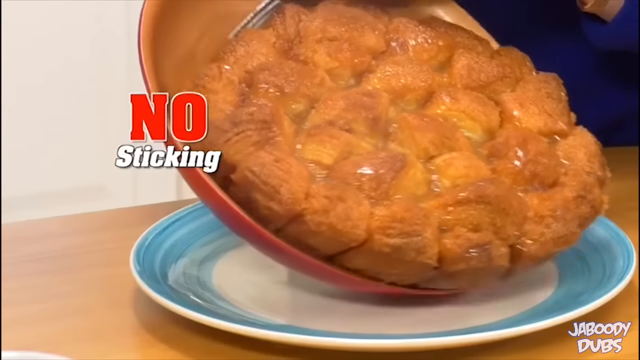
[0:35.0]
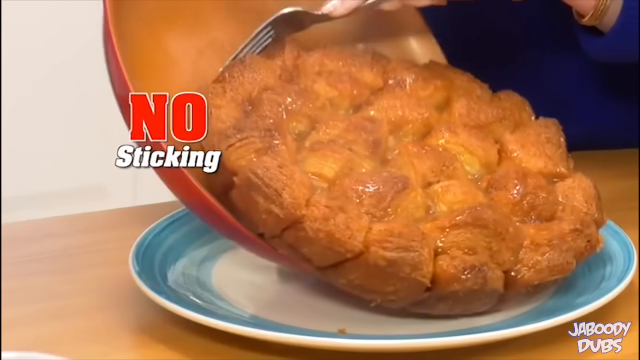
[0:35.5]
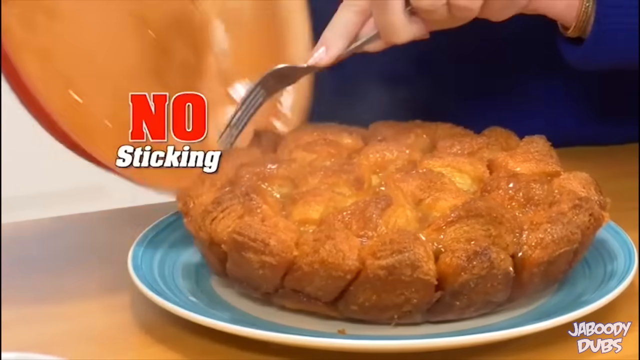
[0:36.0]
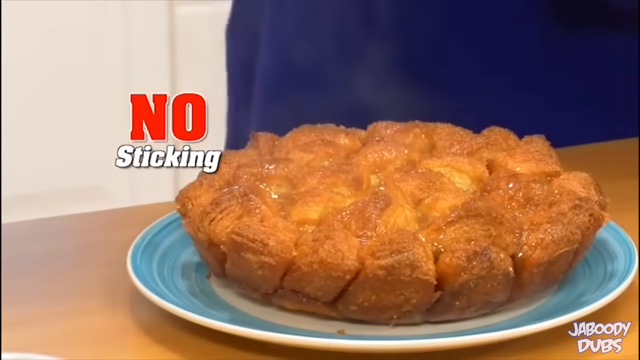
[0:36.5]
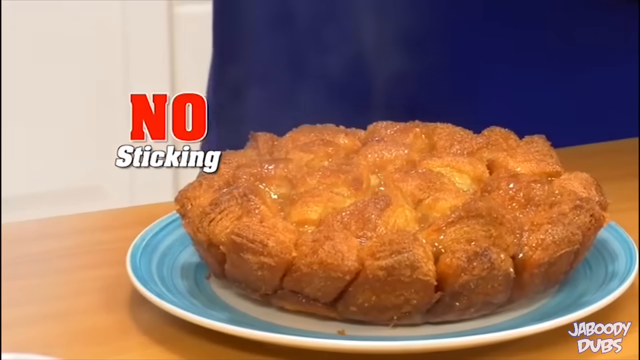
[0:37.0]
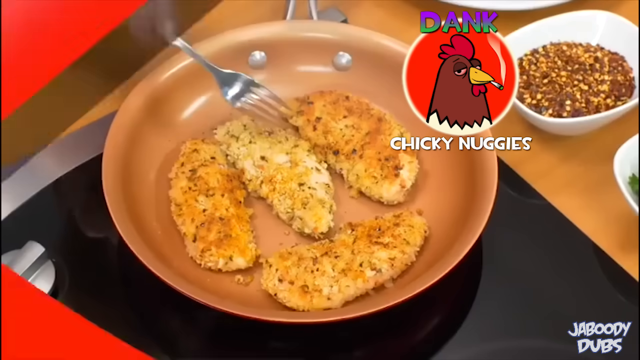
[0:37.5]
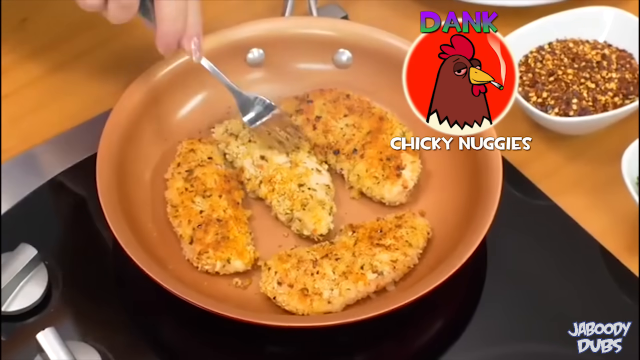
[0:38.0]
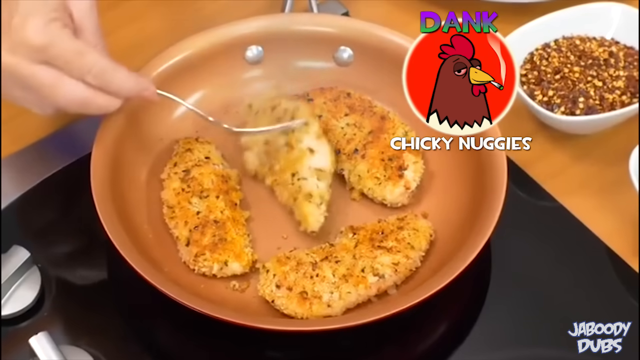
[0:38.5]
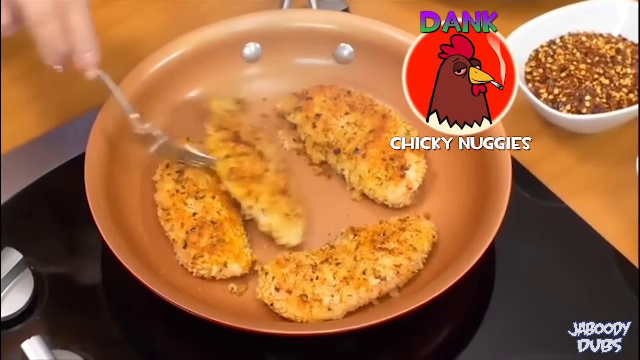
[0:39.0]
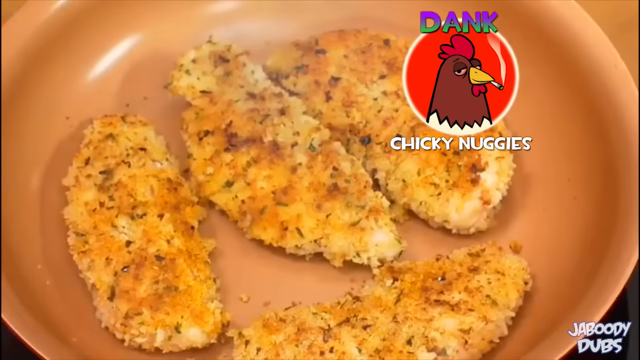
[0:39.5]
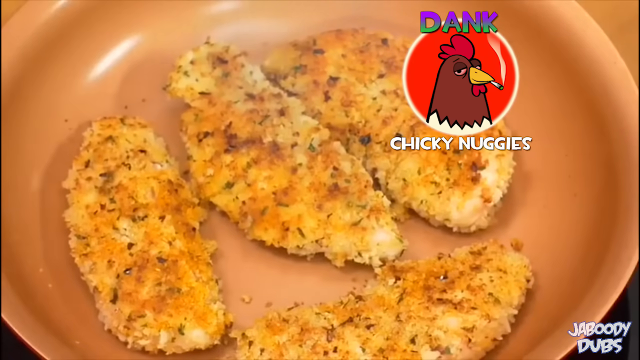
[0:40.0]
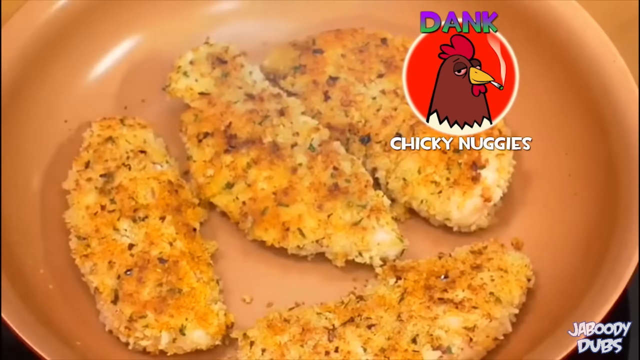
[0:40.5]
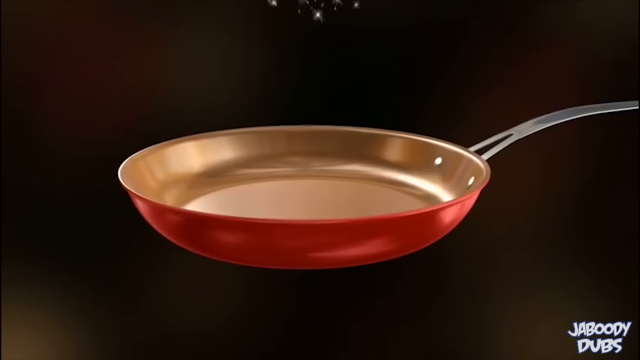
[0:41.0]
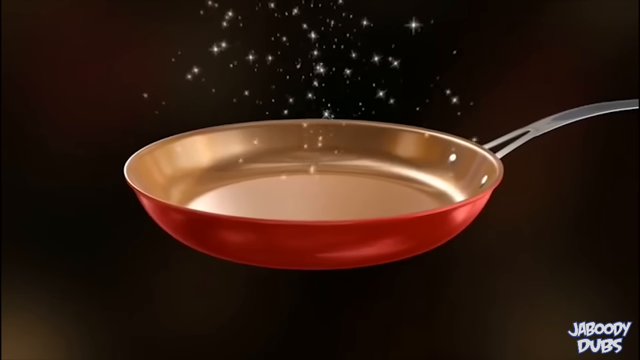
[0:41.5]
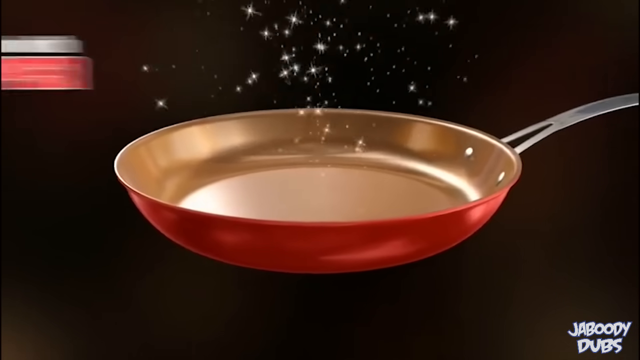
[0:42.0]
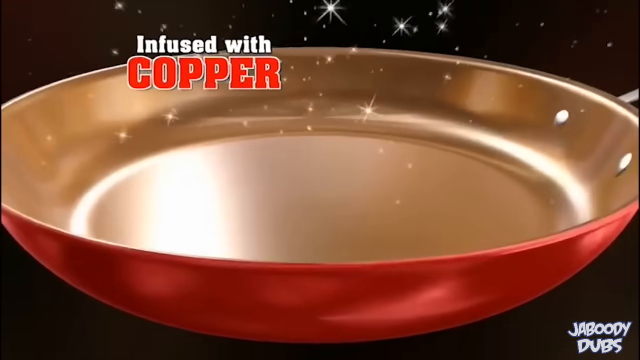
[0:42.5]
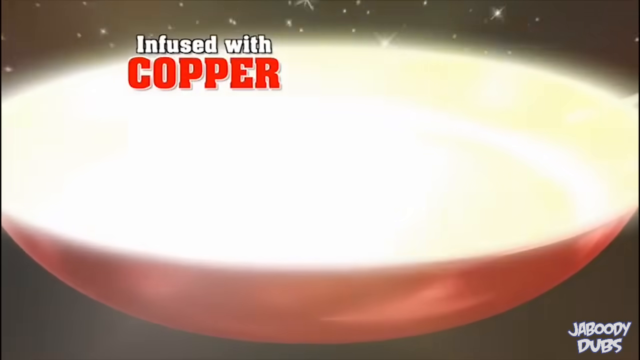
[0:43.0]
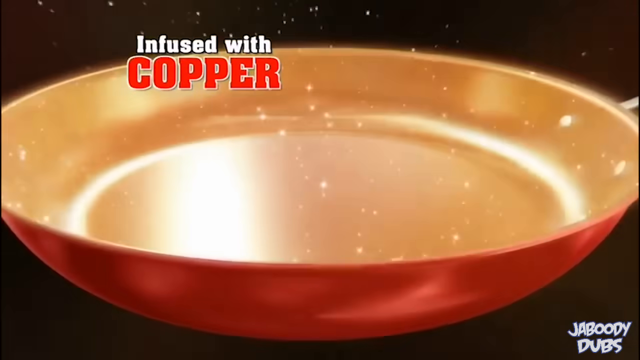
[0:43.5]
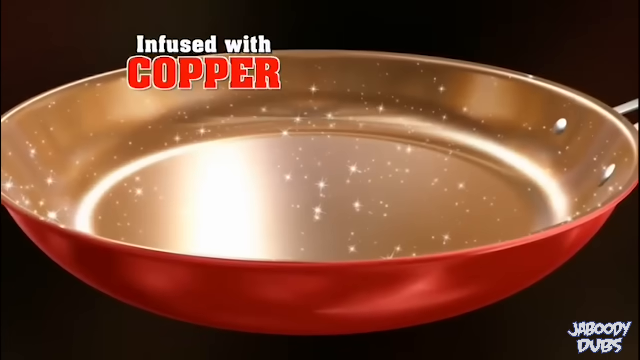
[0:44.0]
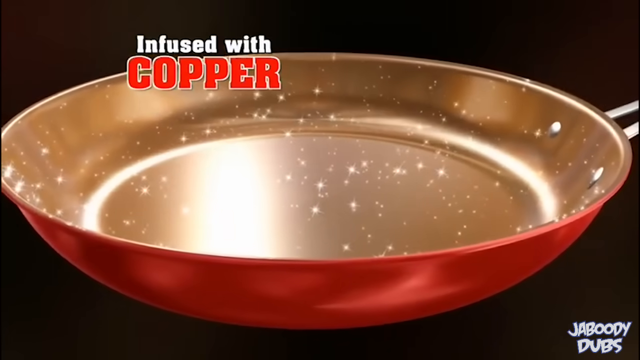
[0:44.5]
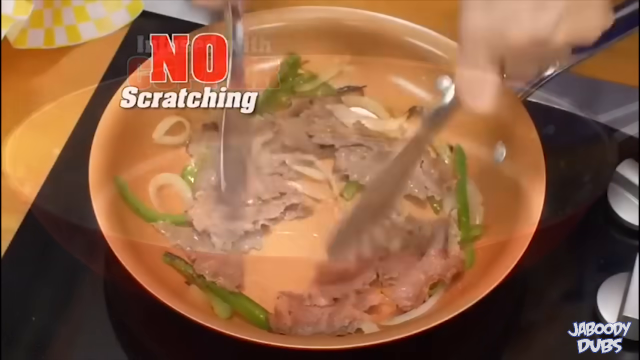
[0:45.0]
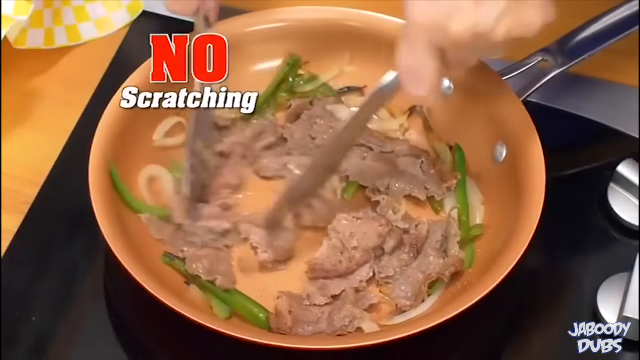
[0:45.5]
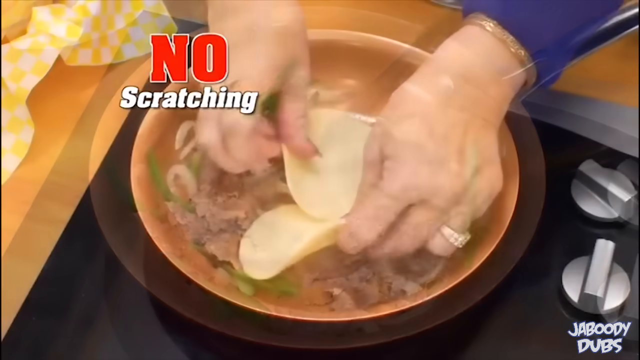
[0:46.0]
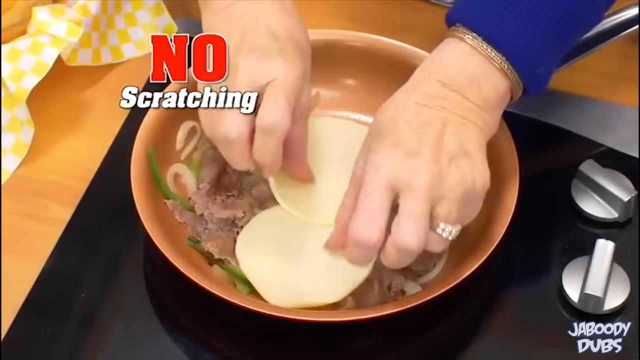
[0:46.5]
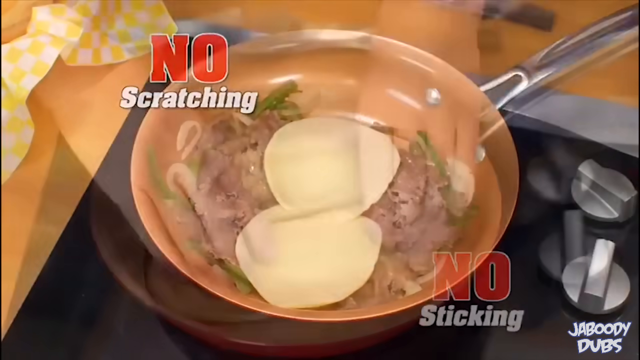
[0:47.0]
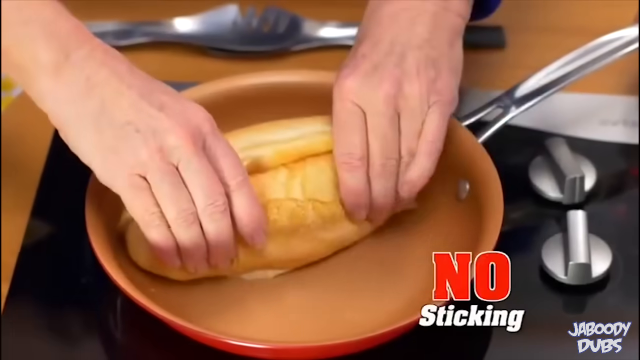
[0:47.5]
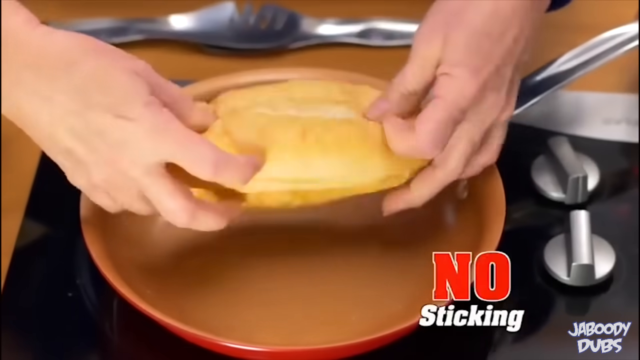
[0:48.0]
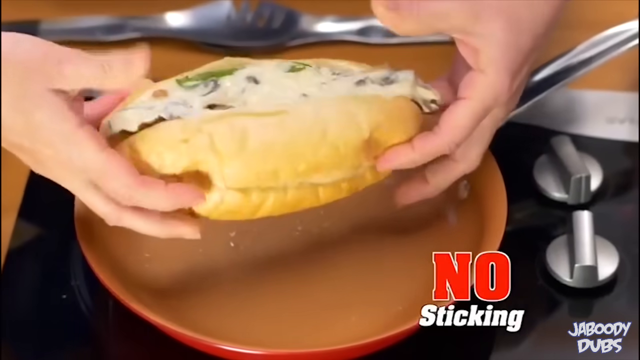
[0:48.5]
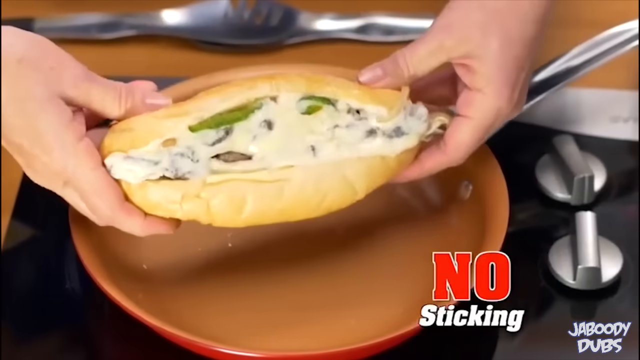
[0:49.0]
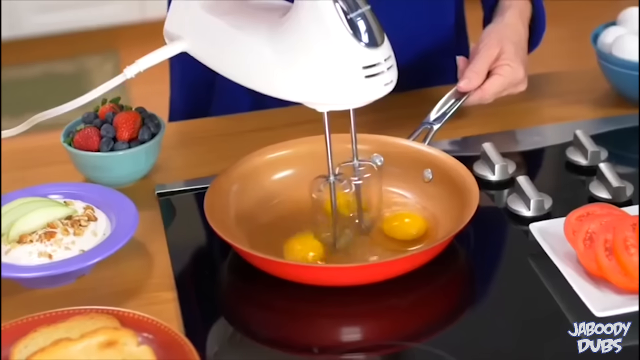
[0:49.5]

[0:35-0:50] What looks like some kind of bread, cooked on a skillet, is slid onto a plate. Pieces of meat are put on the plate, some kind of loaf is placed on top of the meat, and the person makes a steak sandwich. Eggs are scrambled in the skillet with an egg beater, and fish is fried in it. Text states that the skillet is copper infused, that it does not scratch or stick, and that chicken nuggets can be made in it. Different types of food keep appearing, including what possibly looks like a cake, and the video cuts back and forth between them. Cooked onions are in the skillet, and many ingredients on the table surround it. The video keeps cutting back to show that the skillet is infused with copper. The woman in the blue sweater handles it, holding some food that looks like chicken.